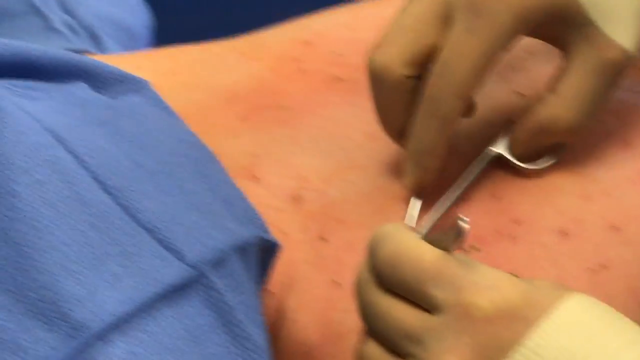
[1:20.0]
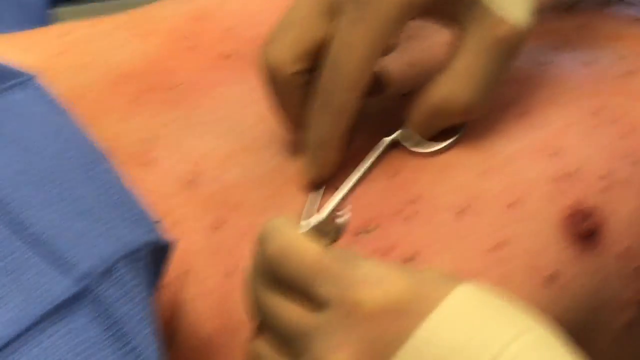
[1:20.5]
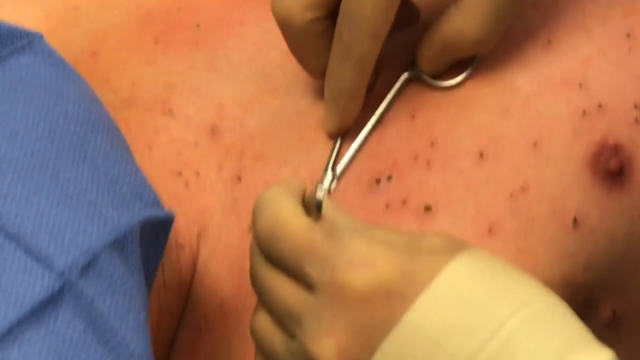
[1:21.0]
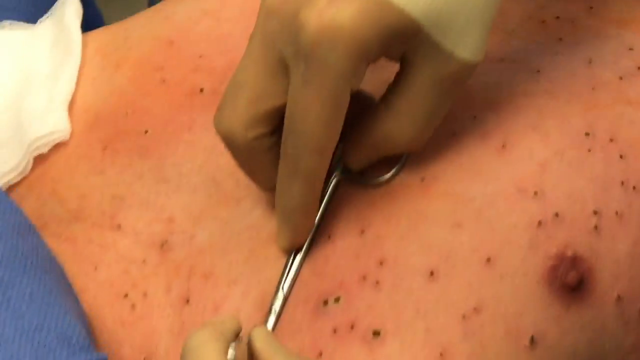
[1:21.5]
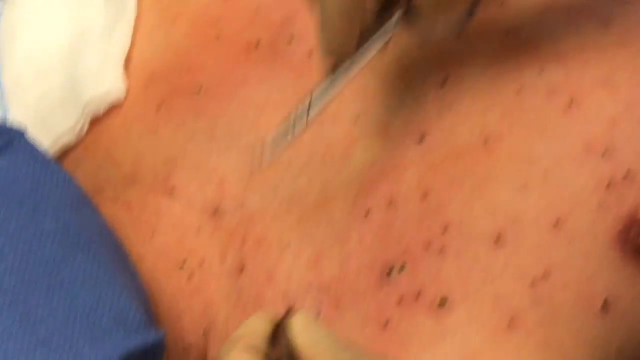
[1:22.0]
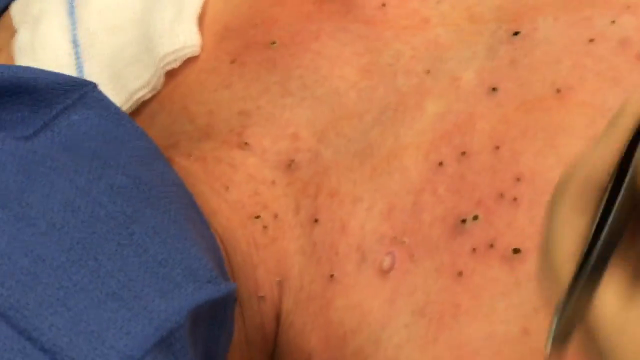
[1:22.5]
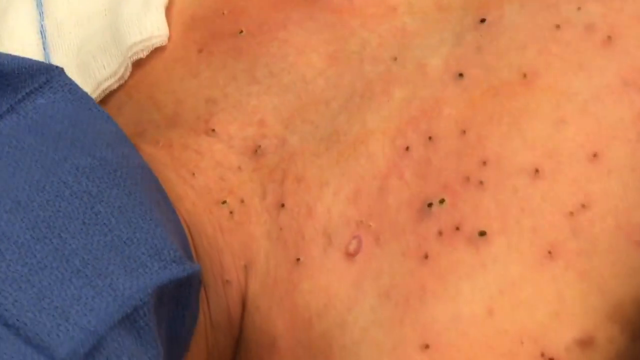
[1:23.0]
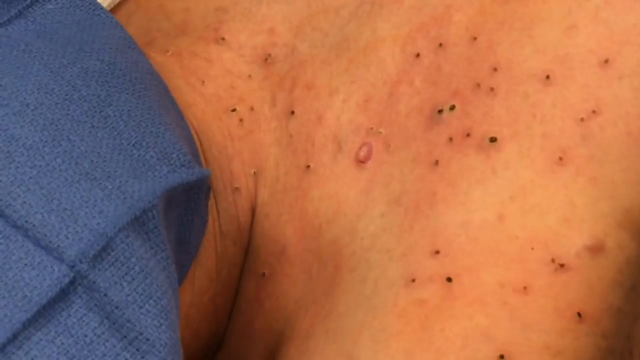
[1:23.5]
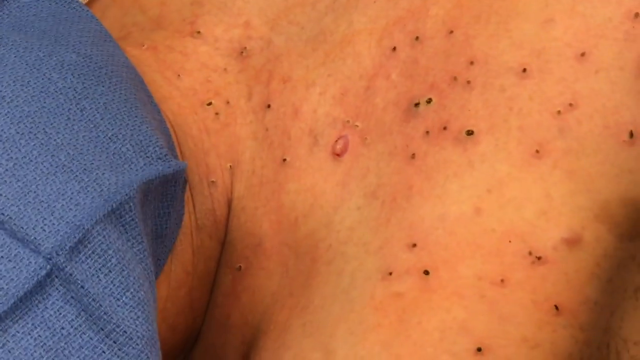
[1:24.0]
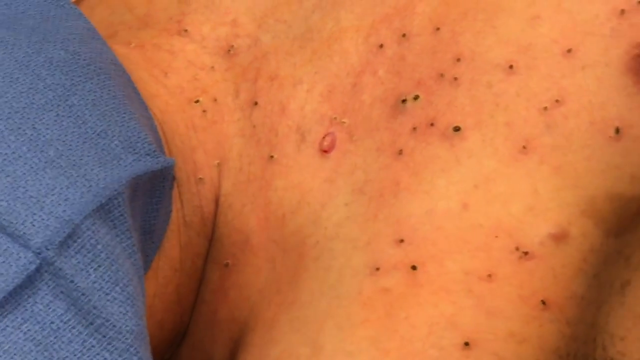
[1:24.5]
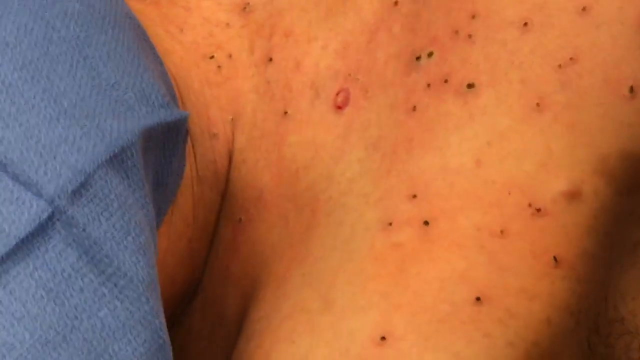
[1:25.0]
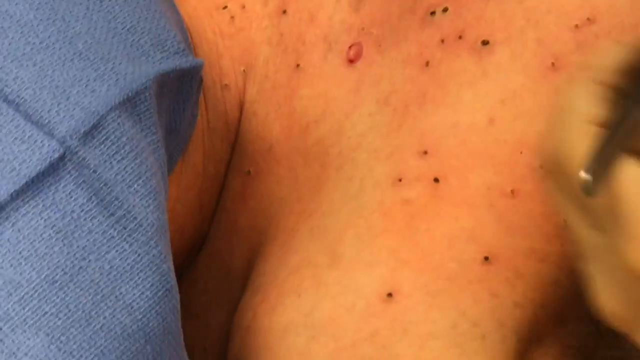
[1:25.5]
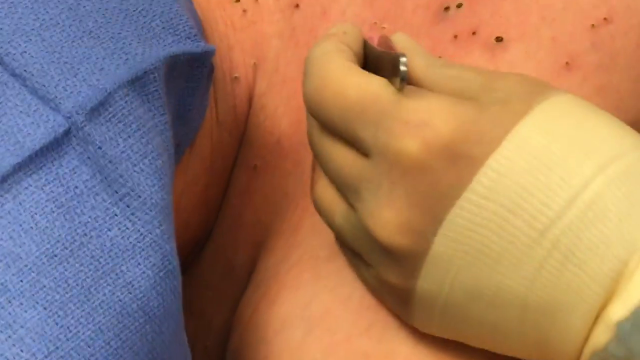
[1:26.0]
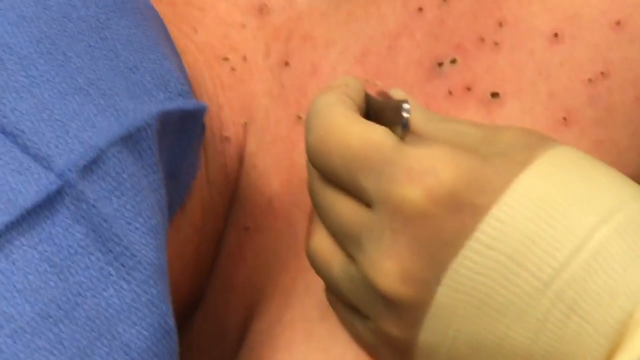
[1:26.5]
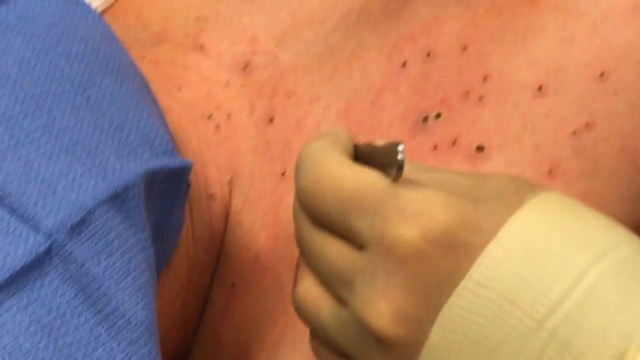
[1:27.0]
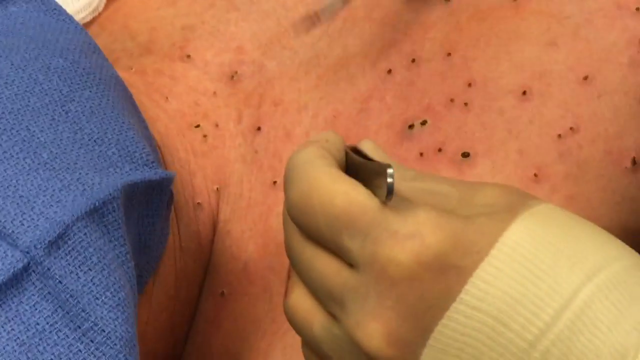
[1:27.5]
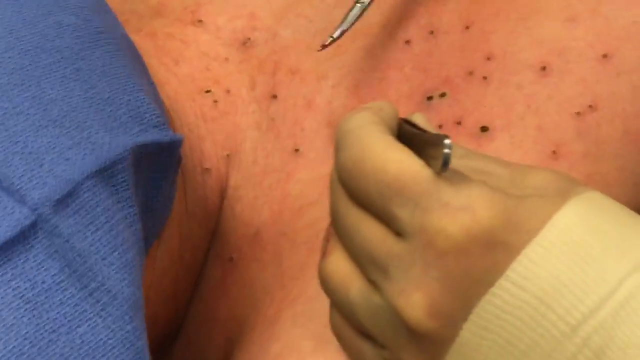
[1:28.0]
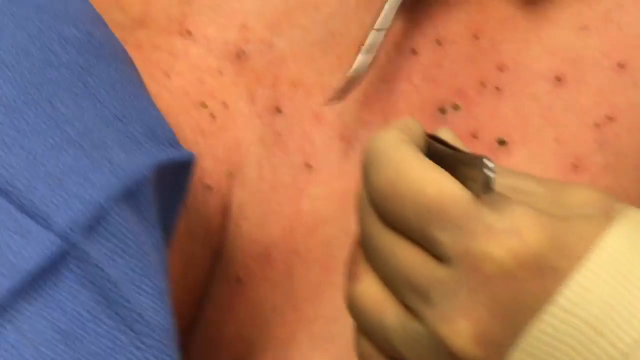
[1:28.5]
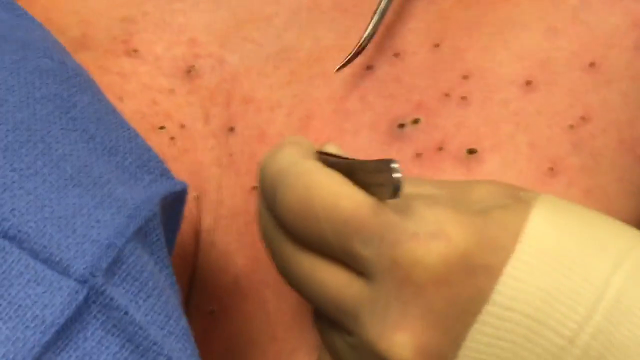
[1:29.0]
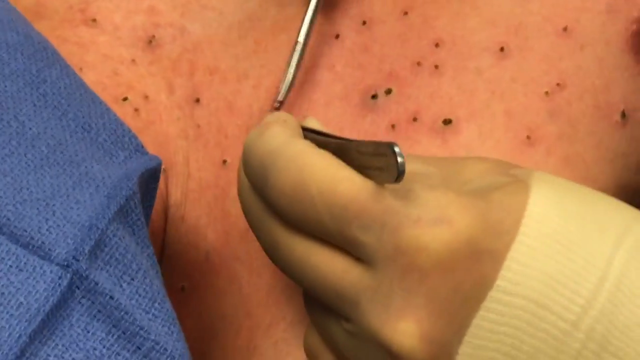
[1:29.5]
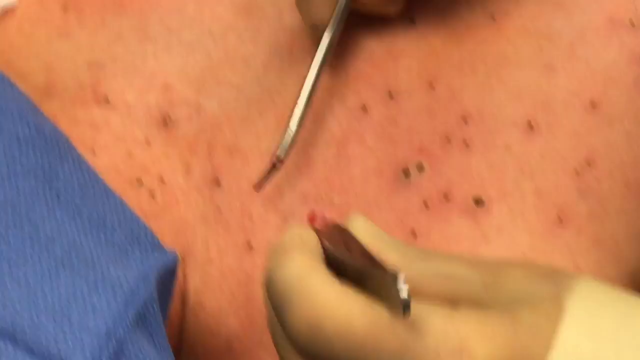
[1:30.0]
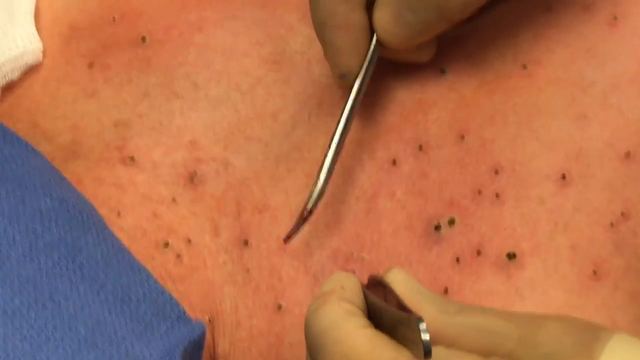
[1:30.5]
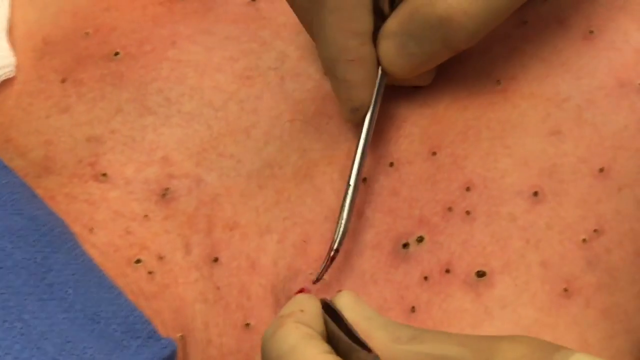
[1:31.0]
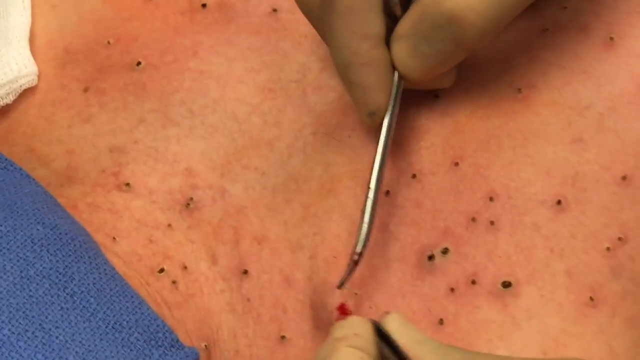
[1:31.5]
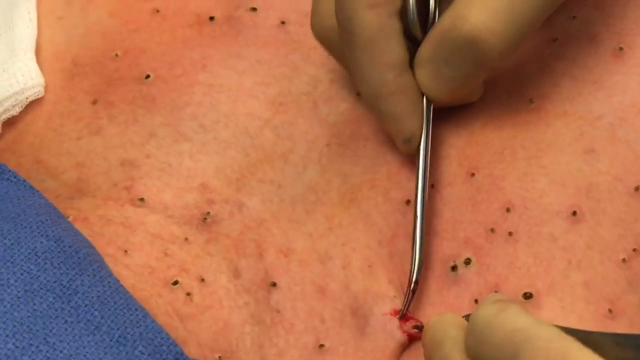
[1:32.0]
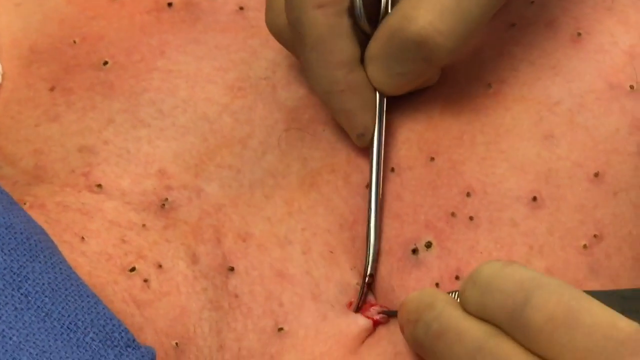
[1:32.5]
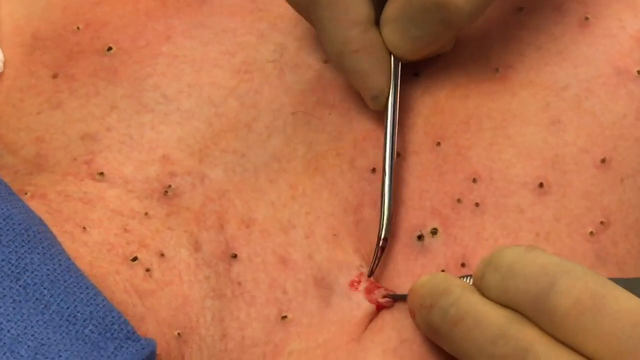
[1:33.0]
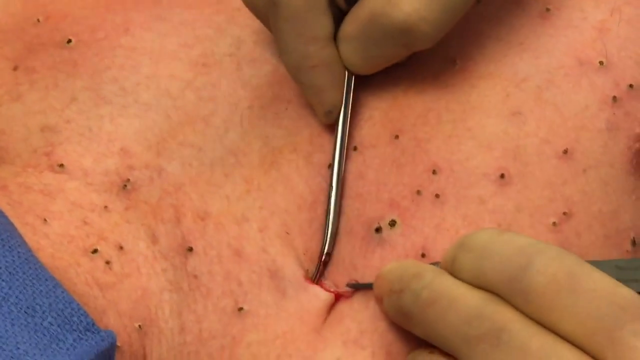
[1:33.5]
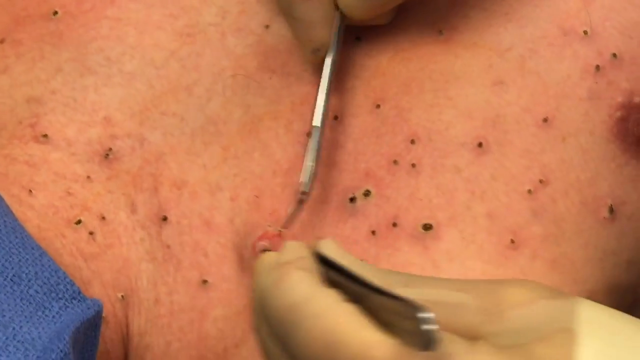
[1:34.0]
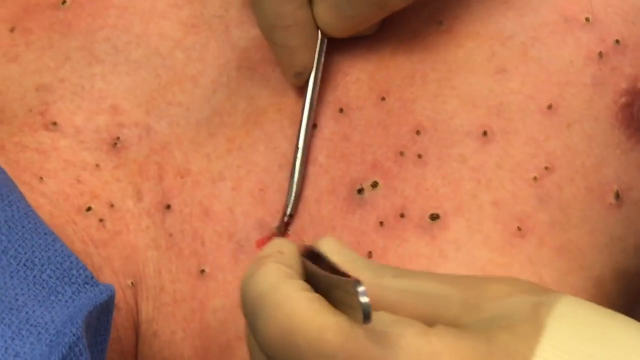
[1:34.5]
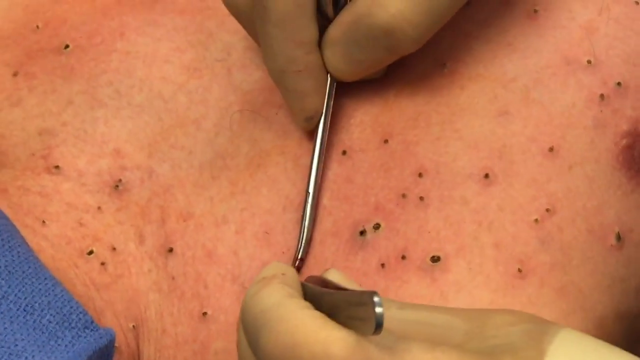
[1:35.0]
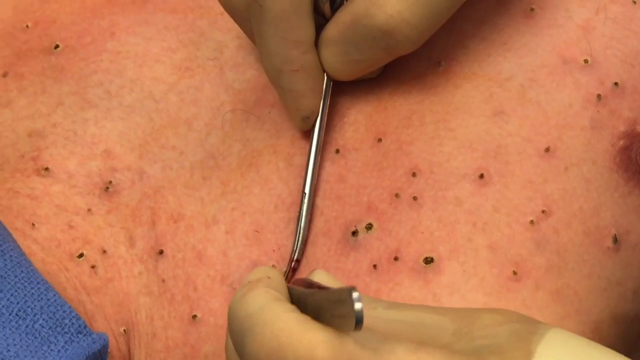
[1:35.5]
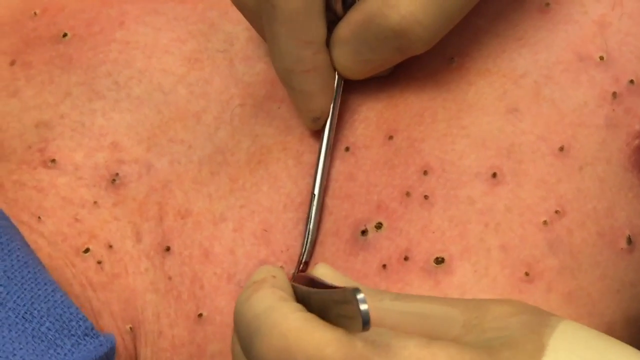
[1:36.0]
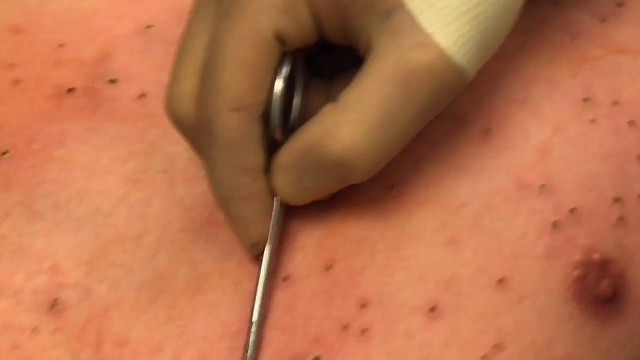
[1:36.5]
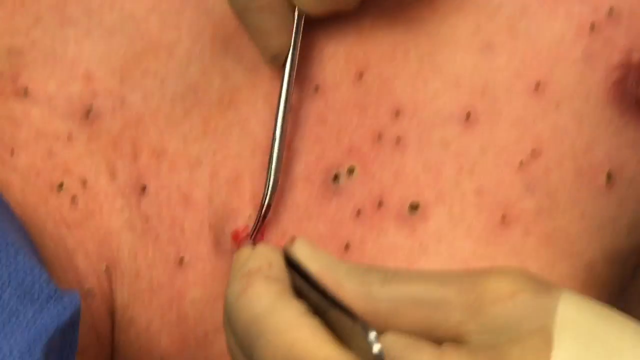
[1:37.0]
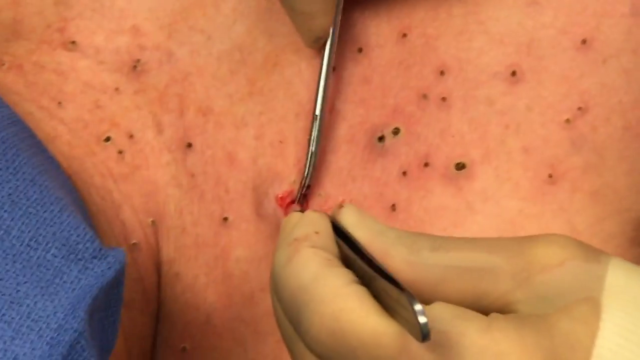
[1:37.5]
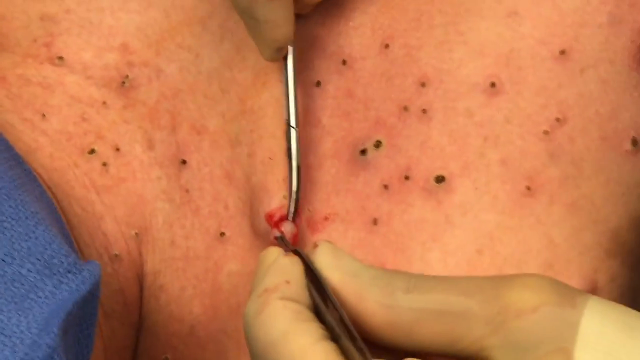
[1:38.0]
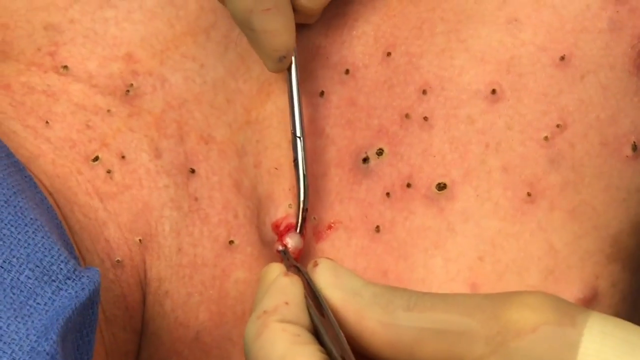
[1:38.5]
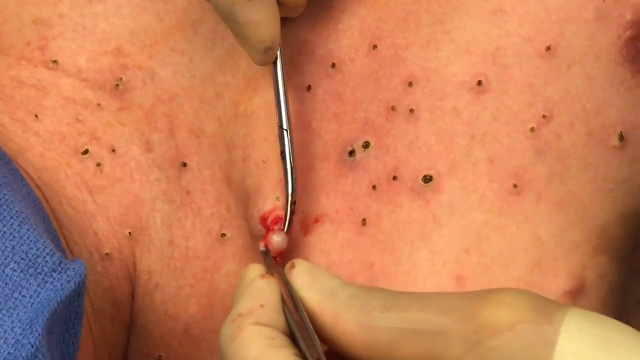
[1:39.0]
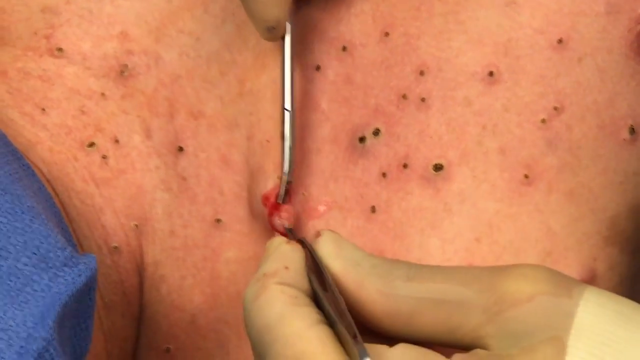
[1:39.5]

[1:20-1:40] A dermatologist removes a larger fibroma from a Caucasian male patient. Around it is a cluster of smaller fibromas that have already been burned off with a laser, now small black dots. The doctor works on the upper chest below the right clavicle, just beside the armpit, with the patient's arm extended out for easier access to the side. The doctor holds silver surgical instruments in both hands: surgical scissors in the right hand, used to cut the base of the larger neurofibroma, and surgical tweezers in the left hand, used to grab the neurofibroma as he teases it out from under the skin. The fibroma is round, globular, white and somewhat fatty-looking, bleeding a little around the base where it was cut, and it looks to be coming out relatively easily and intact. It is bigger underneath than it looks on top: on top there is a decent bump, but what comes out from underneath is much larger. A bit of gauze lies on the patient's left shoulder for dabbing blood or leakage. The doctor wears off-white nitrile gloves on both hands and works slowly and precisely. The patient's face is covered with blue surgical sheeting. His right nipple and areola are visible, as is a slight bit of his right armpit. A small brown birthmark is just above his nipple and to the left of his armpit, mostly on the side rather than the chest, surrounded by many tinier neurofibromas scattered around like freckles, all of which have been burned and have small black heads. An assistant in a blue surgical gown is at the left of the top corner, presumably handling the doctor's items such as gauze and tools.